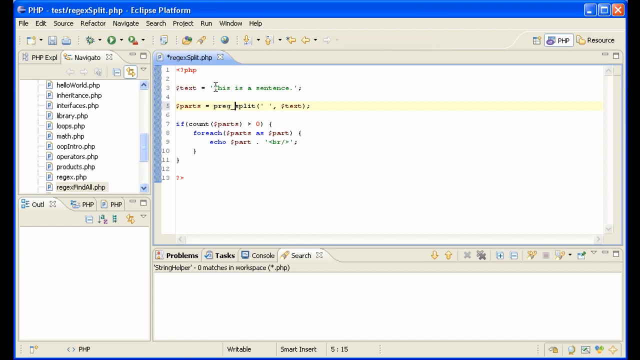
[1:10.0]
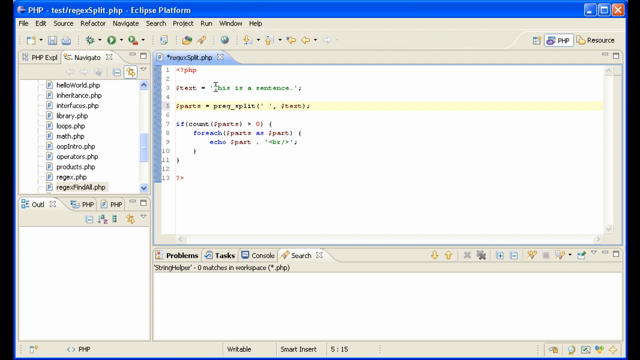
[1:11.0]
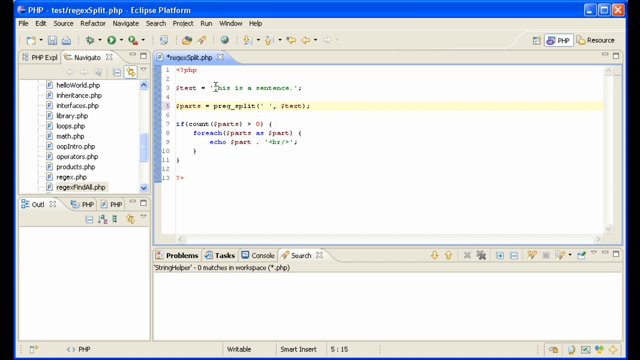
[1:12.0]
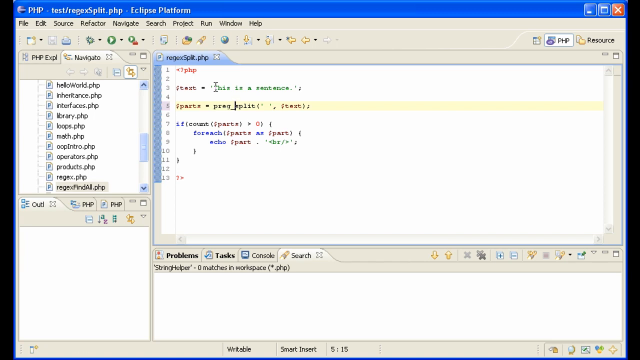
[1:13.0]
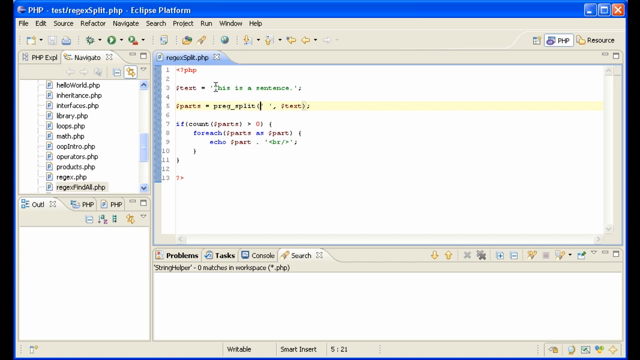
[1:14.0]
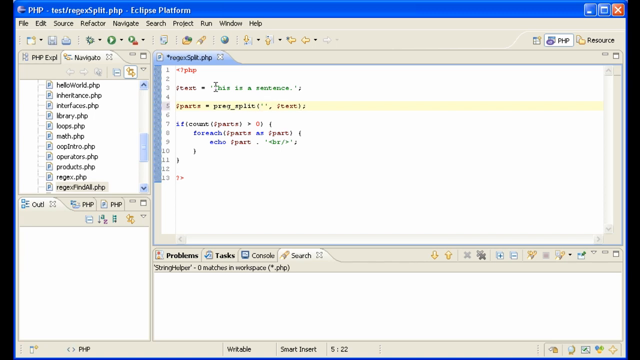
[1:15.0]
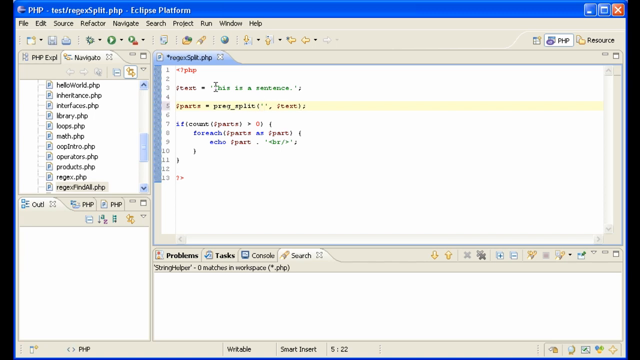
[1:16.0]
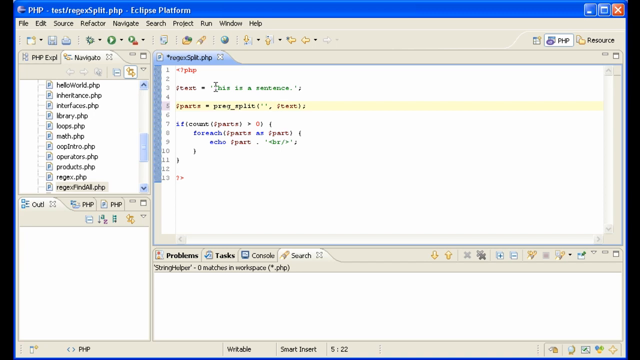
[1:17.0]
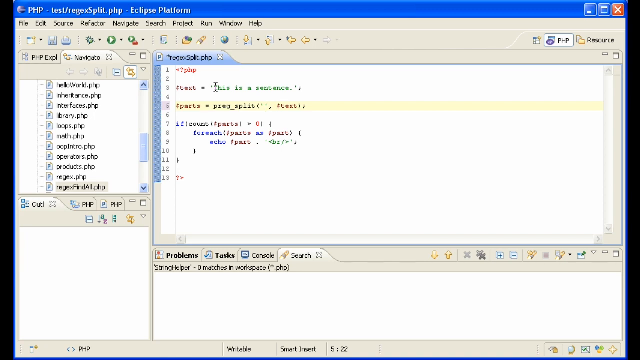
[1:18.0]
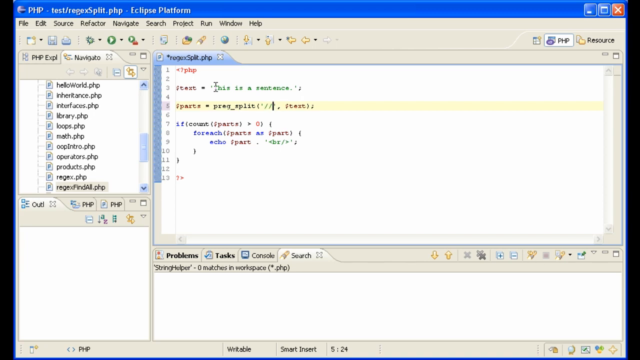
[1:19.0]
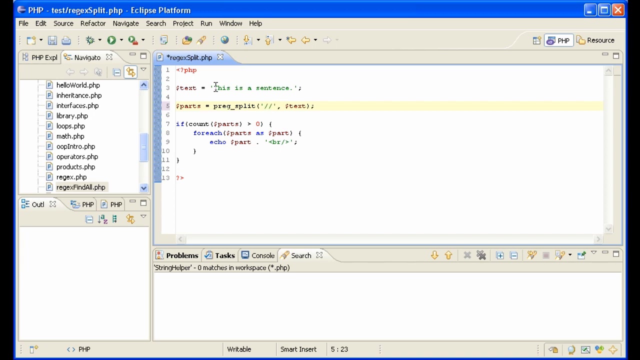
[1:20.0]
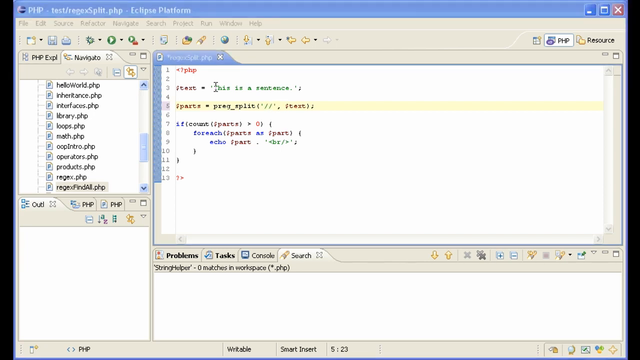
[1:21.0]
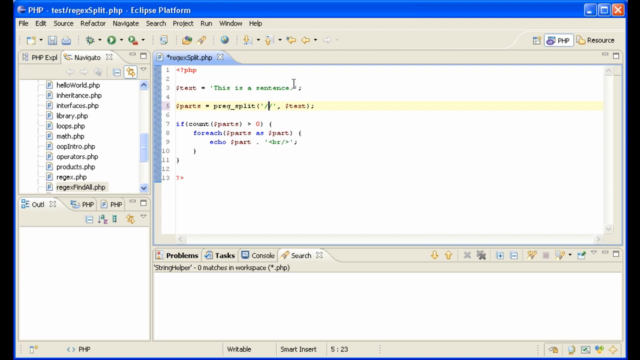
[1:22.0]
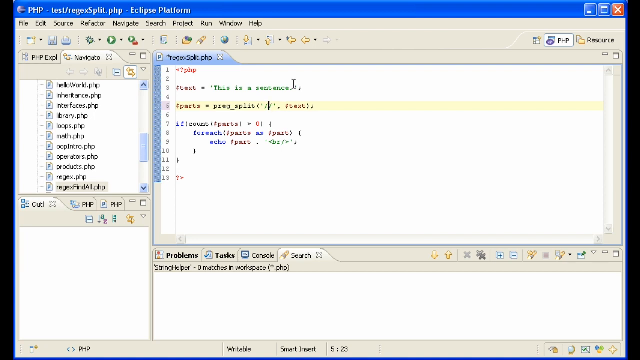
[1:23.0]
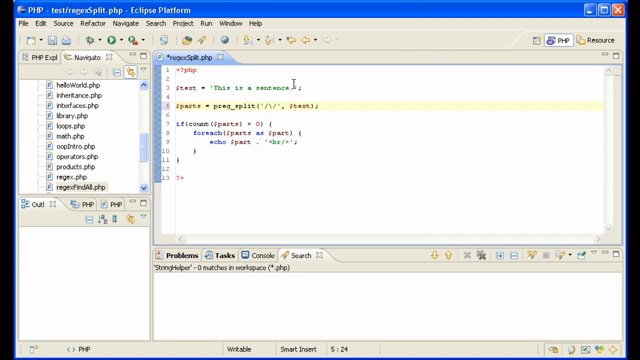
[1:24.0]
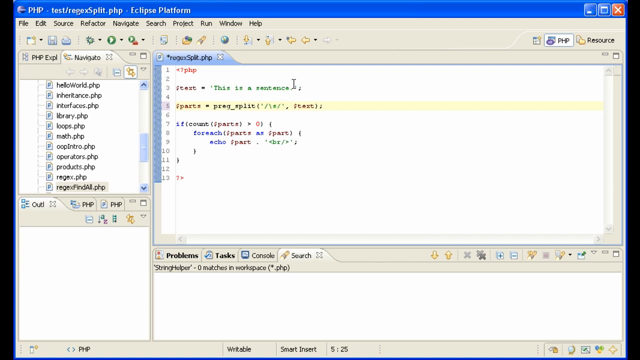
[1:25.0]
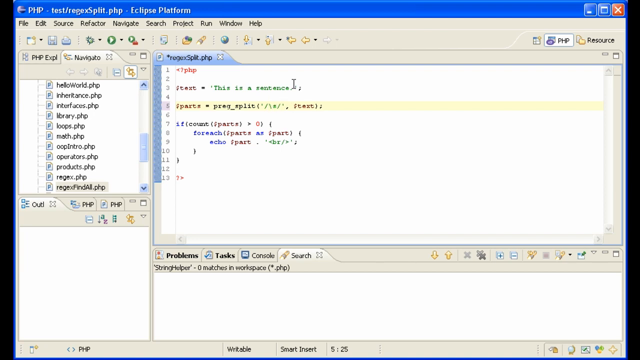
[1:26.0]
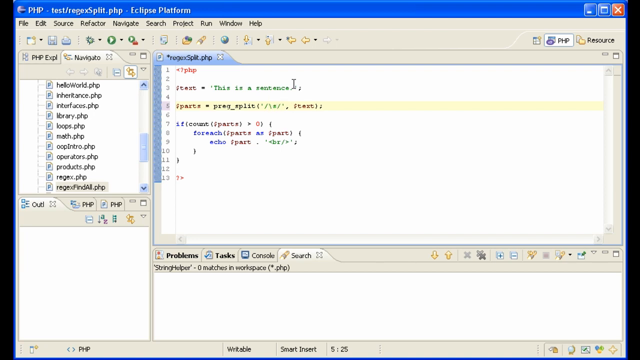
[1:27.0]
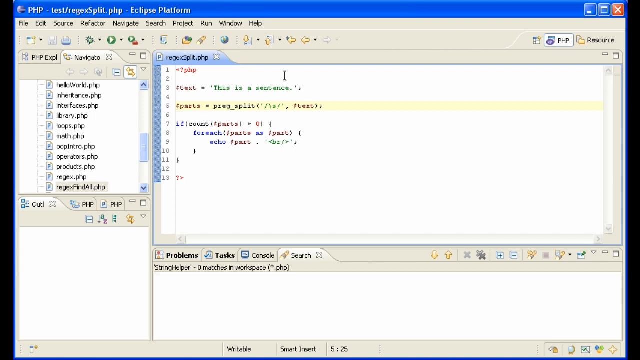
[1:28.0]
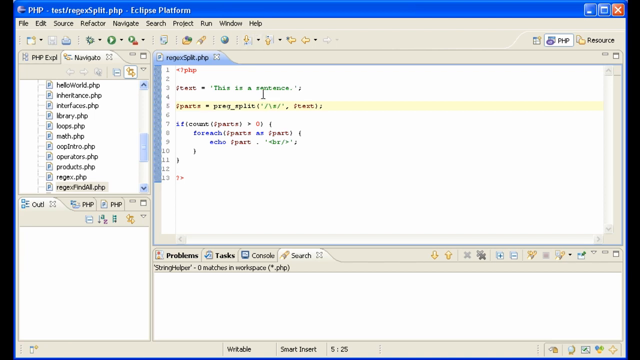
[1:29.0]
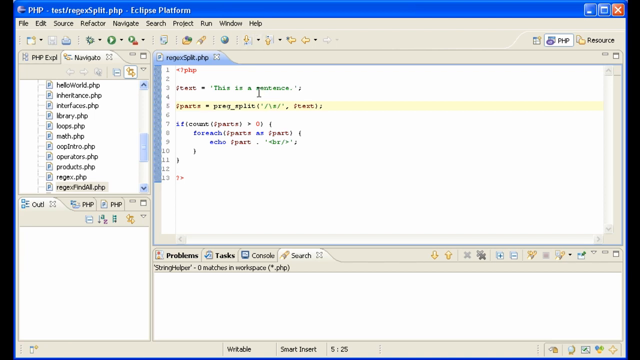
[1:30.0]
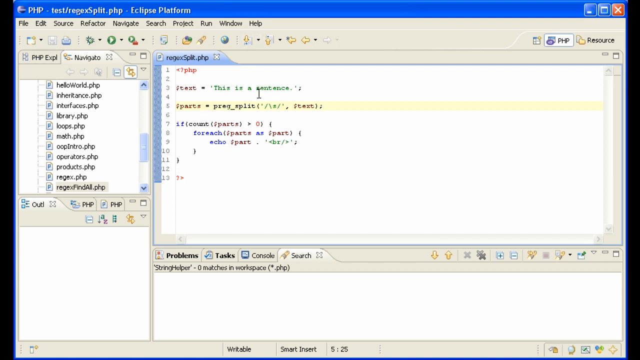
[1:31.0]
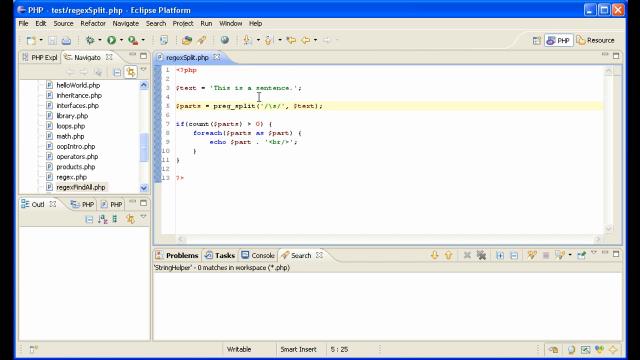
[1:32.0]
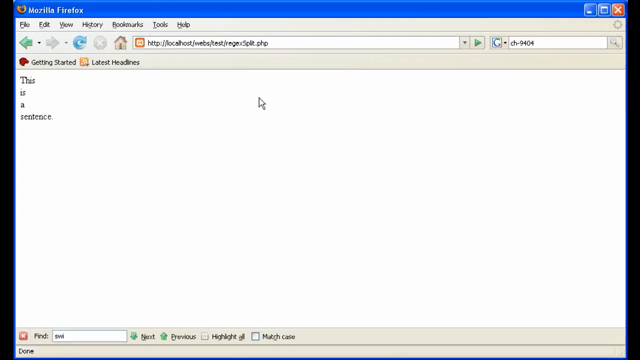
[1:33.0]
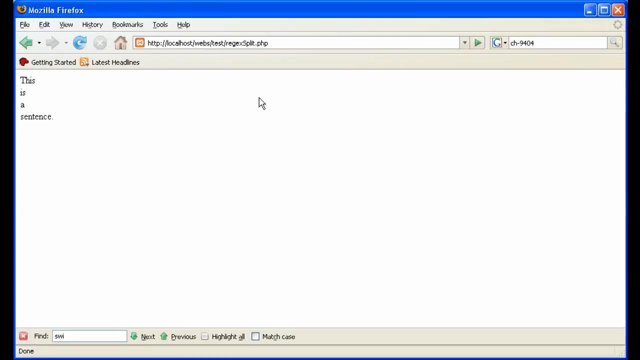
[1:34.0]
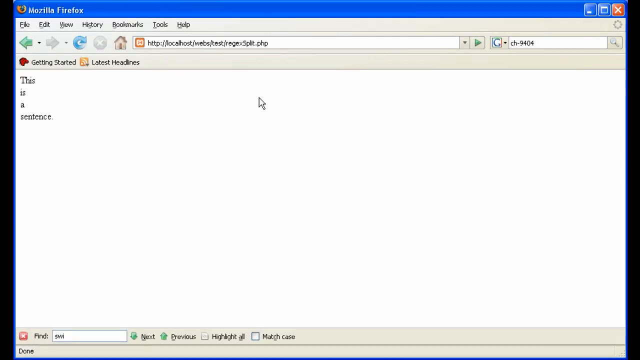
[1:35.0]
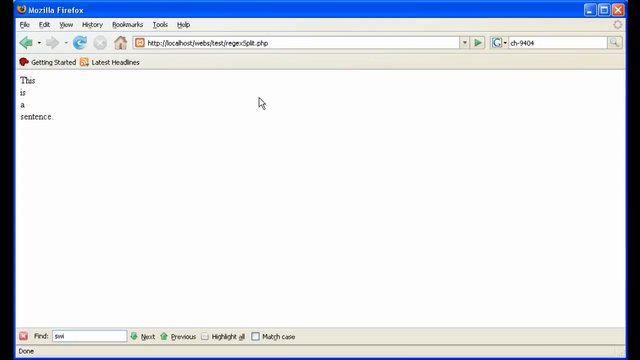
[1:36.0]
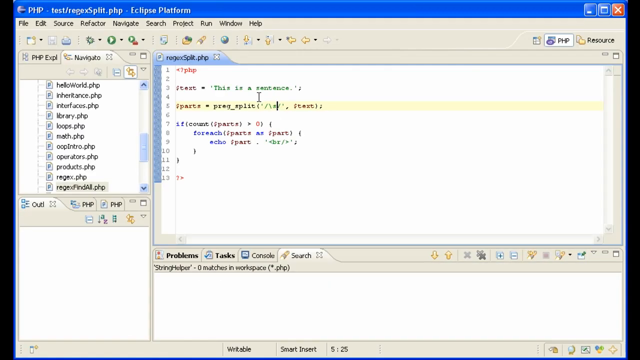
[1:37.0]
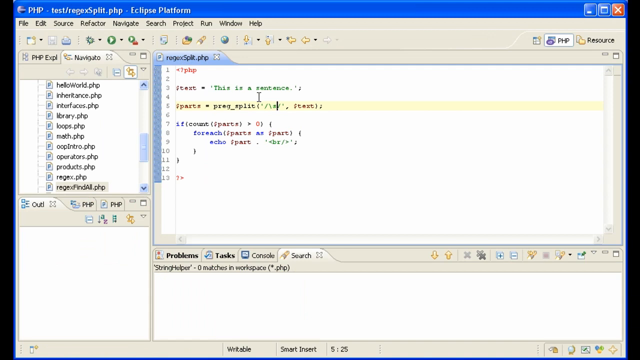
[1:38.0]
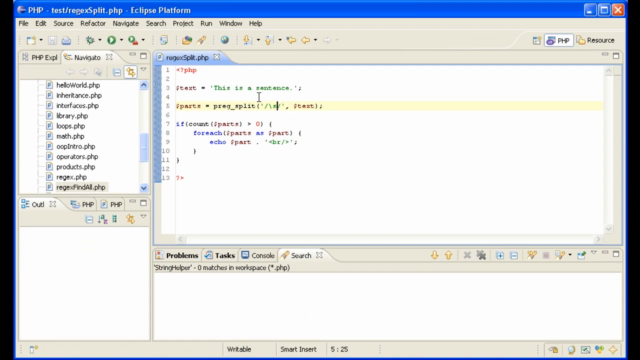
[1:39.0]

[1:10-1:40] After split is prefixed with "preg_", the file is saved; an asterisk marks the unsaved file and disappears when it is saved. The empty space inside the apostrophes in the parentheses is removed and replaced with two forward slashes. Inside the slashes, a backslash and apparently an X or some other symbol are typed. The PHP file is saved and the page is reloaded in Mozilla Firefox, but nothing changes. Back in the Eclipse IDE, the cursor blinks for a few seconds without any changes to the script yet. The unchanged output apparently indicates that the backslash and symbol inside the forward slashes work the same as an empty space.